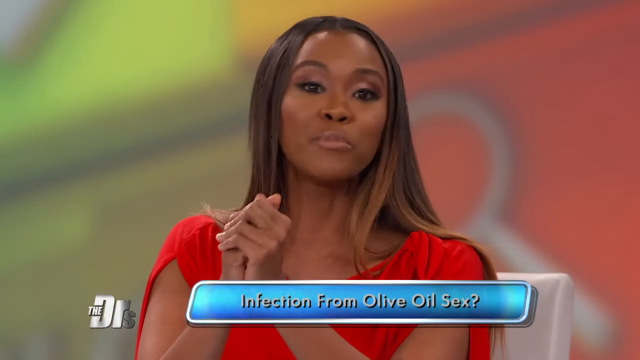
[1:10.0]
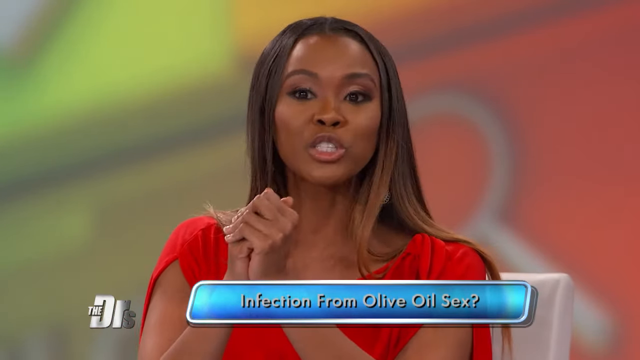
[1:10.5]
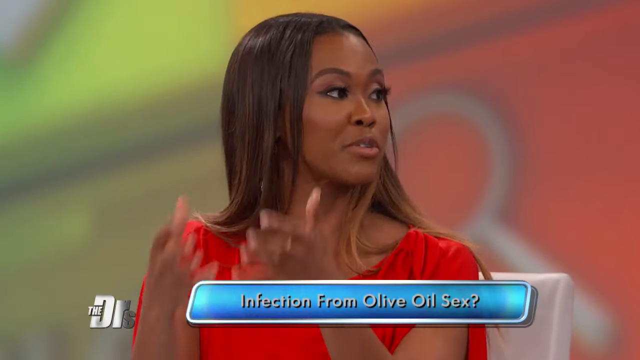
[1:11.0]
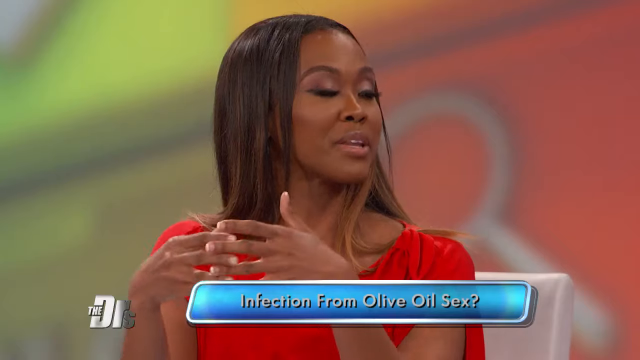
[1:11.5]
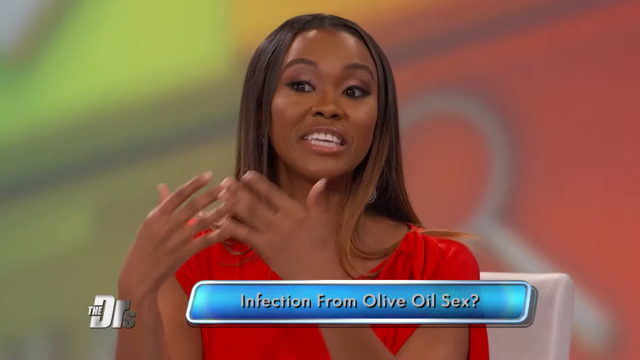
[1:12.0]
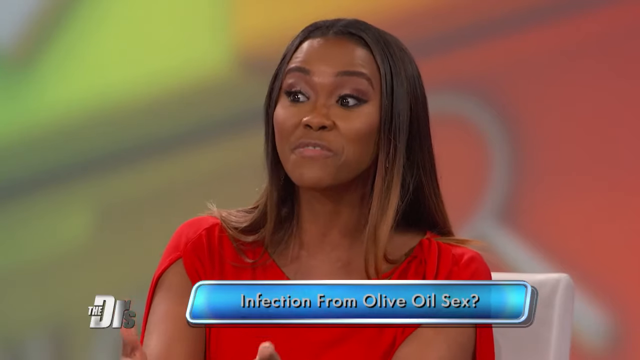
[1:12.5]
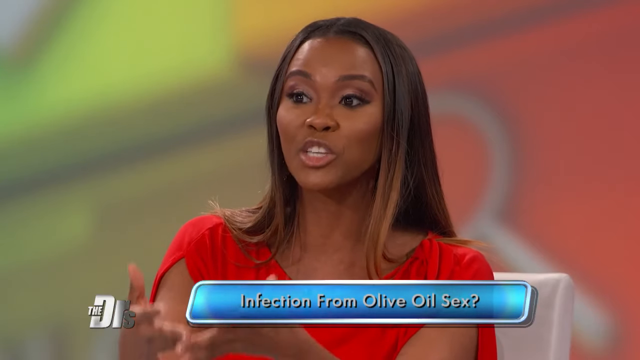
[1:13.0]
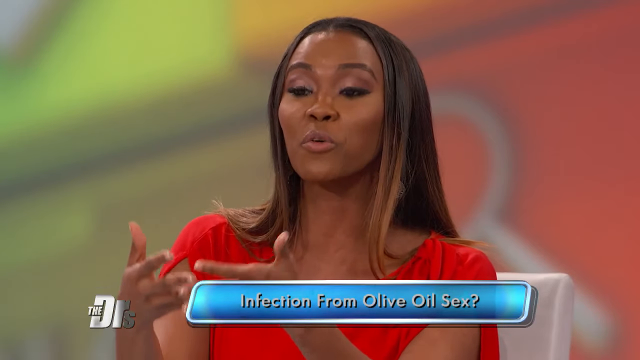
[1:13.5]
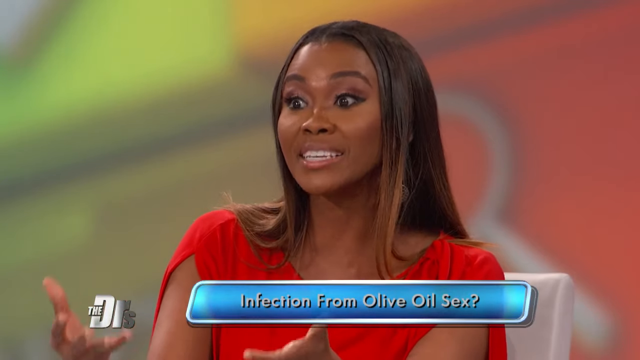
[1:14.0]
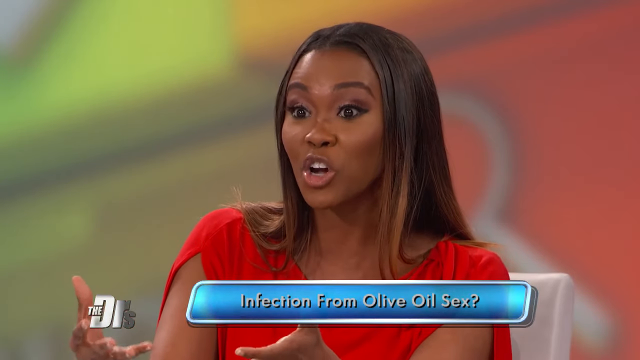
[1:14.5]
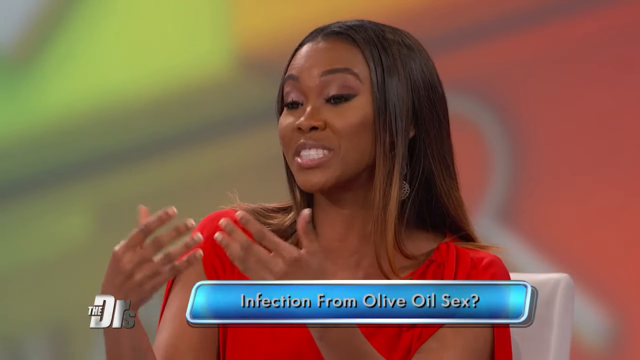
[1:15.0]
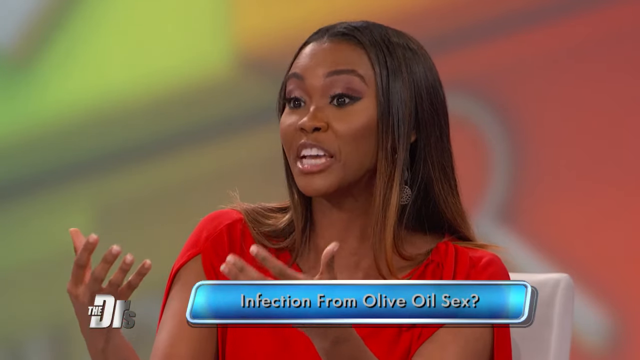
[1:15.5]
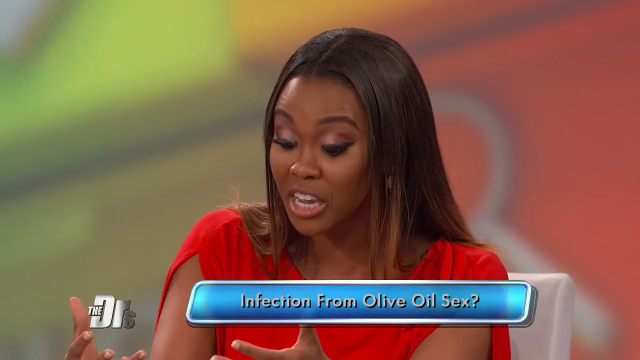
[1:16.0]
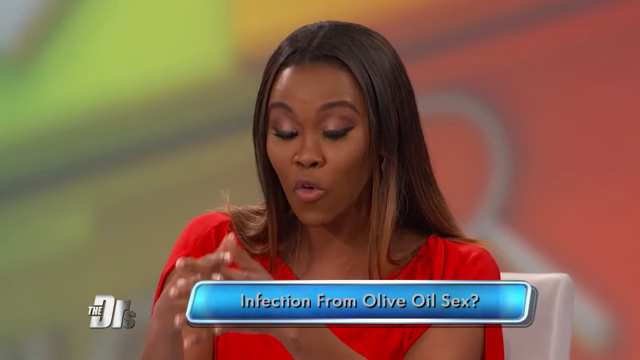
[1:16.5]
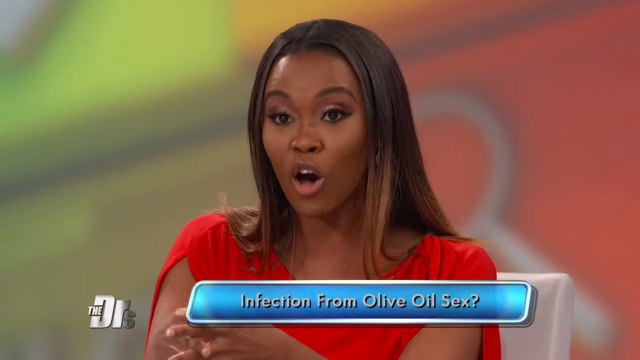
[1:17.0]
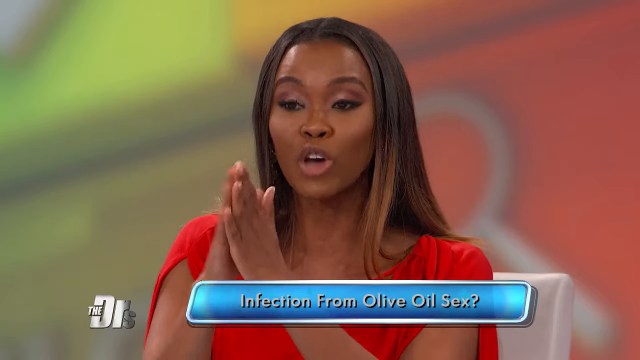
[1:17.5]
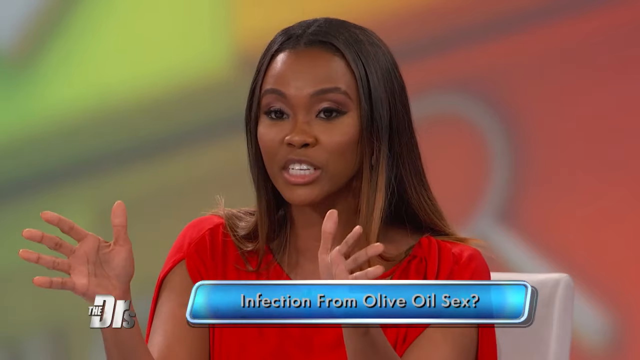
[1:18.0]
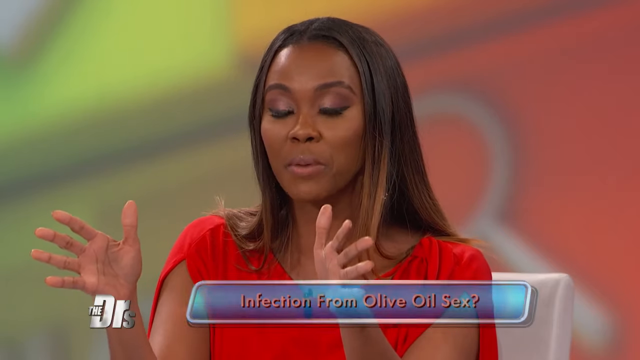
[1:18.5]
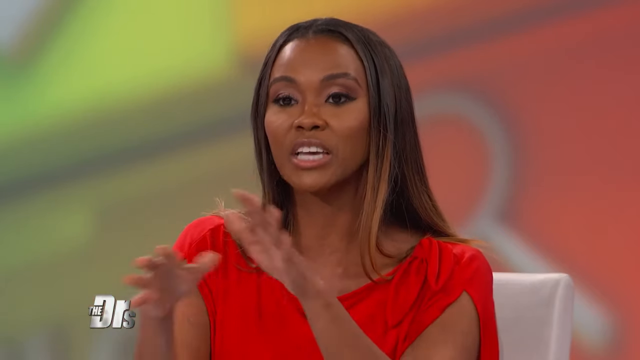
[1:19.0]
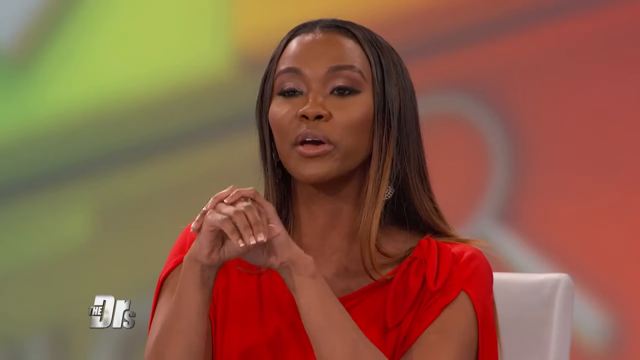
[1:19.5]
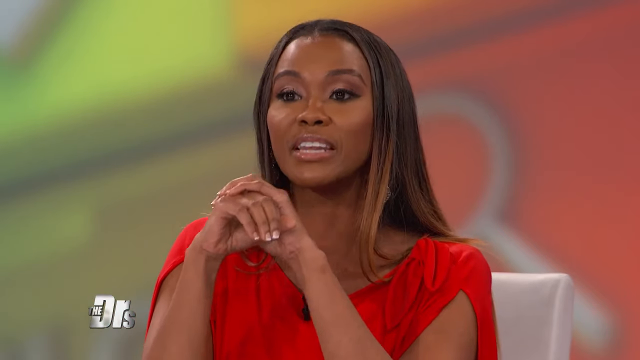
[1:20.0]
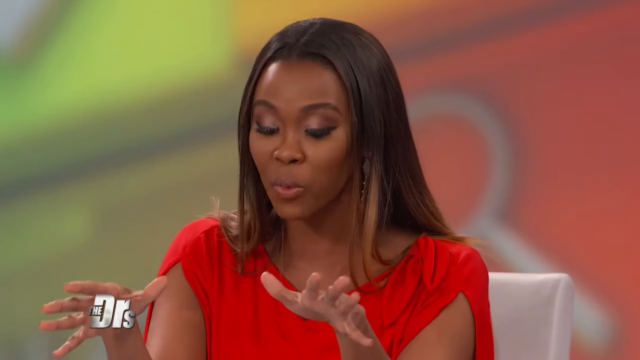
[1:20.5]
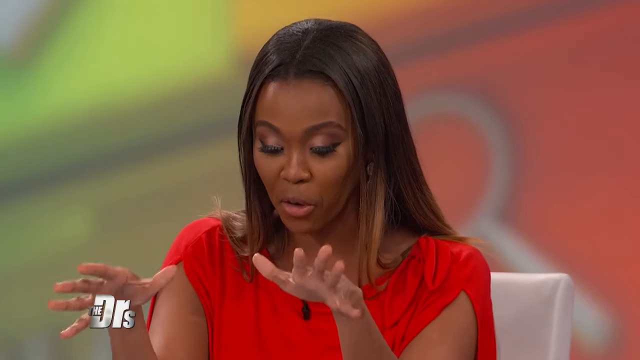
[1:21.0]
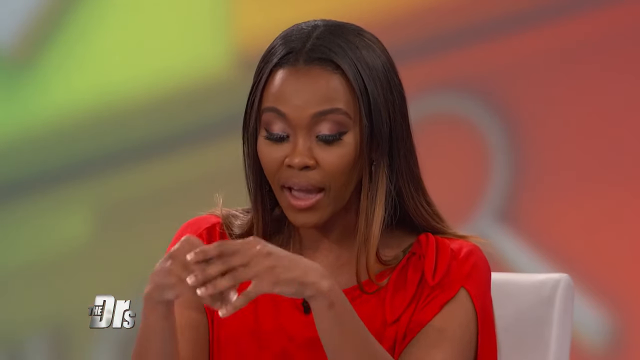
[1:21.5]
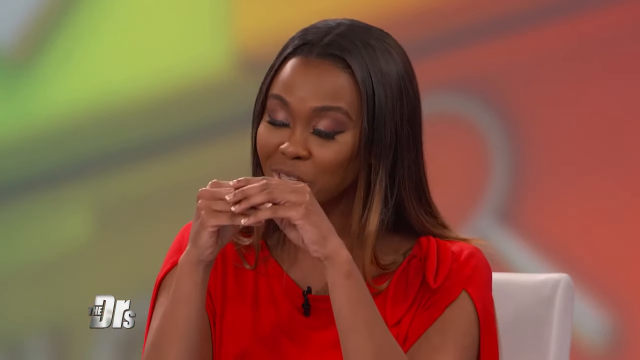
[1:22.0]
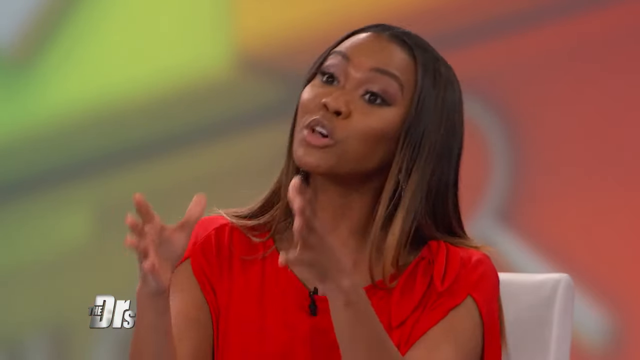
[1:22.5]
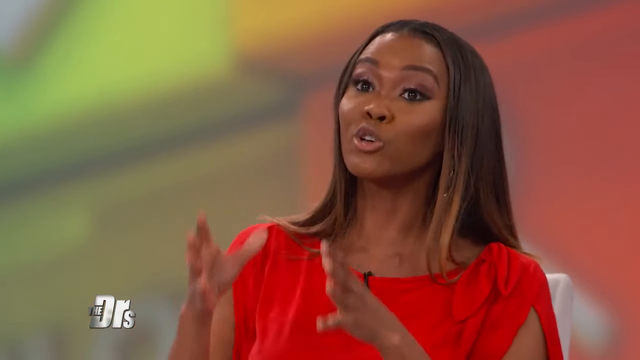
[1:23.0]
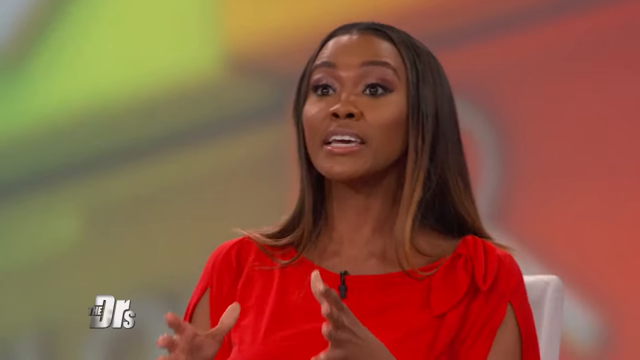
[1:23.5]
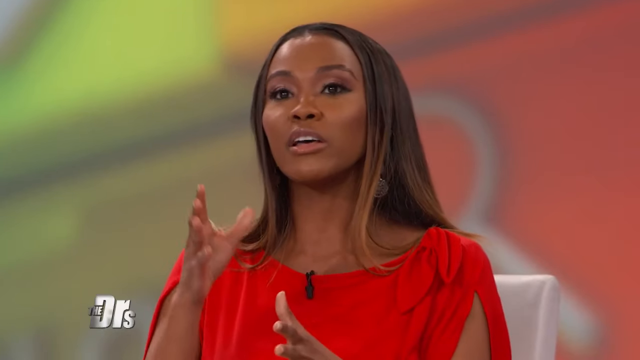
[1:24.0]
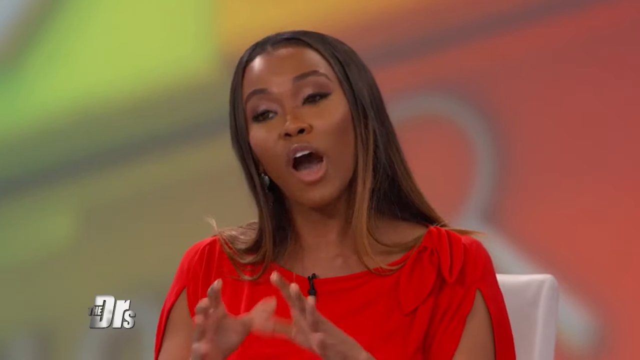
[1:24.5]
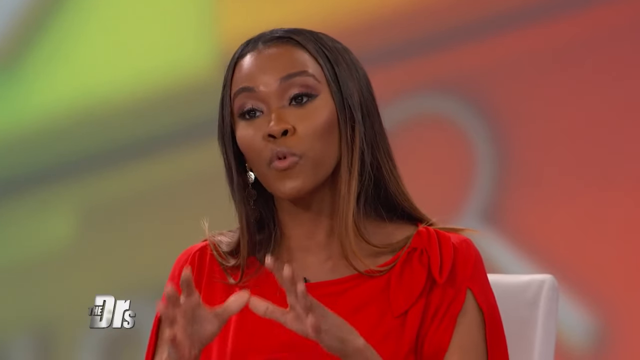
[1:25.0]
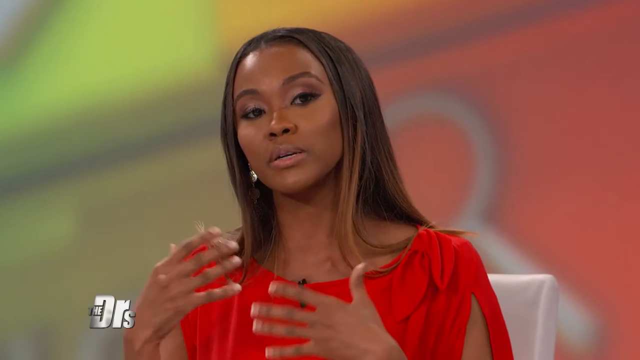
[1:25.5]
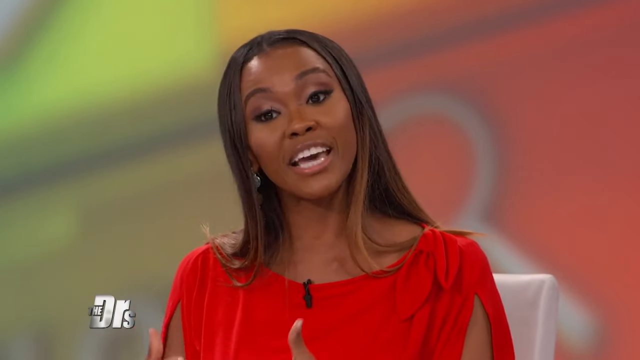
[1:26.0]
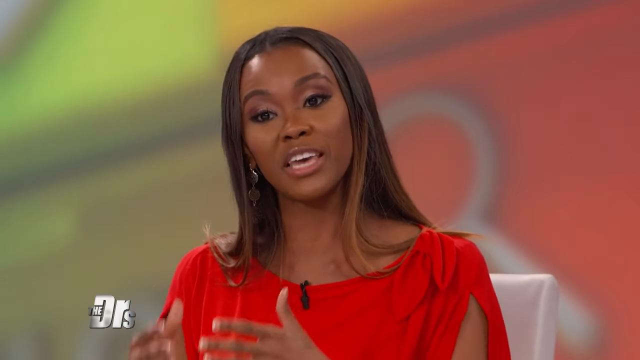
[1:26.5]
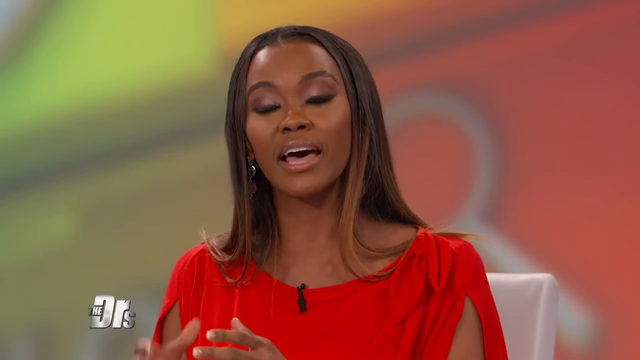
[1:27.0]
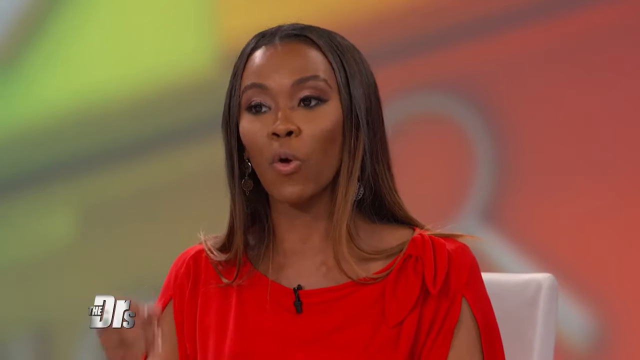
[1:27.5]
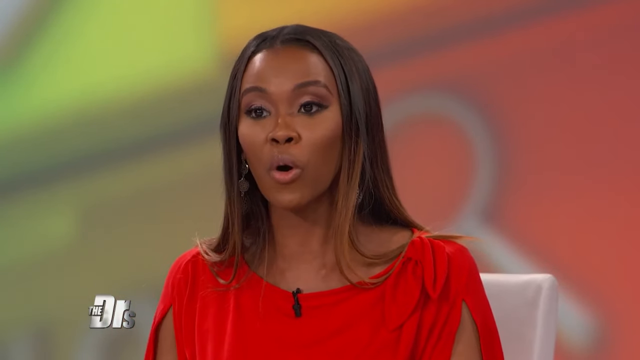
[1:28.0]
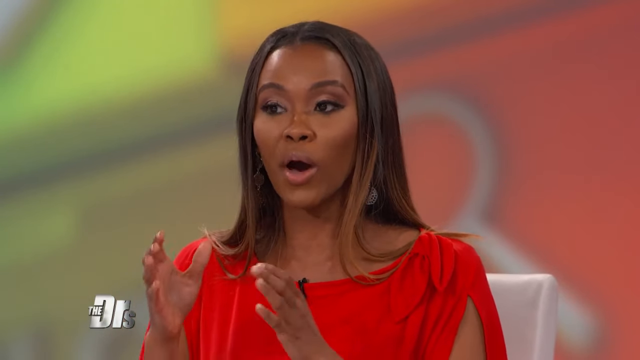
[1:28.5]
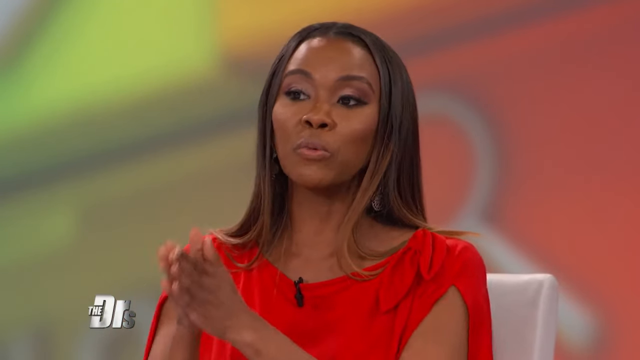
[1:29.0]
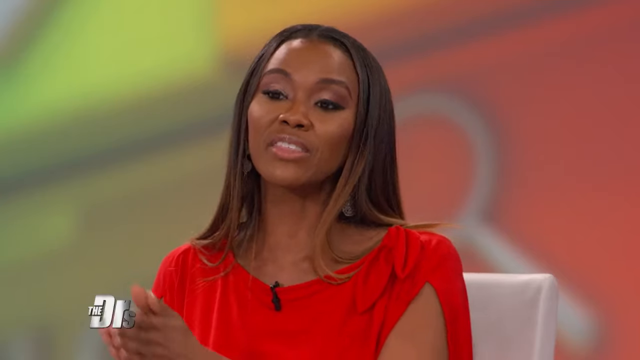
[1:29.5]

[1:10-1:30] The host closes her right hand into a fist and wraps the fingers of her left hand around it as she makes a point. She then opens her hands, repeatedly opening and closing them, puts them in the prayer formation, and throws them open. She keeps speaking and using her hands to sort of guide her point, putting them together with the palms up, then holding them palms down with her thumbs raised. She throws them open to the left and right, then forms a puppet shape with her right hand, her thumb meeting her four fingers, clasps her left fingers over it, and throws her hands apart.